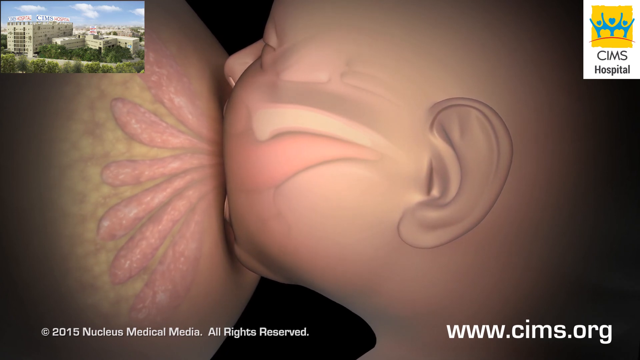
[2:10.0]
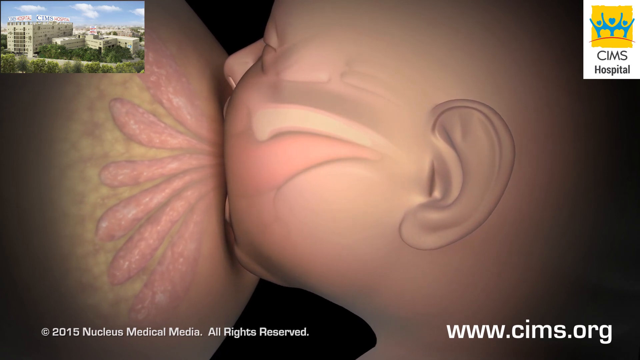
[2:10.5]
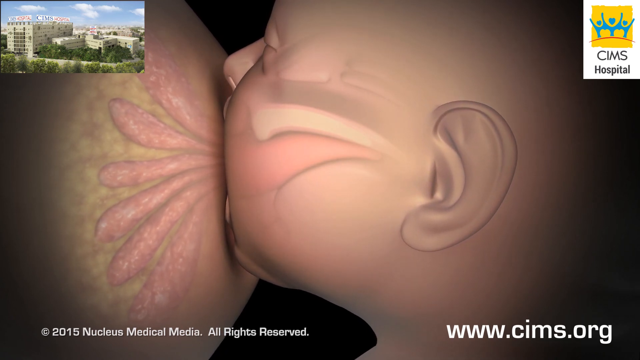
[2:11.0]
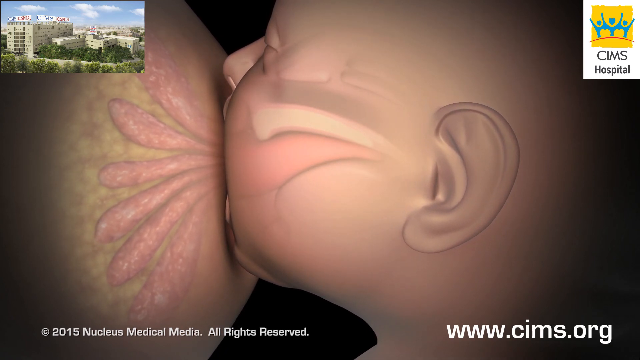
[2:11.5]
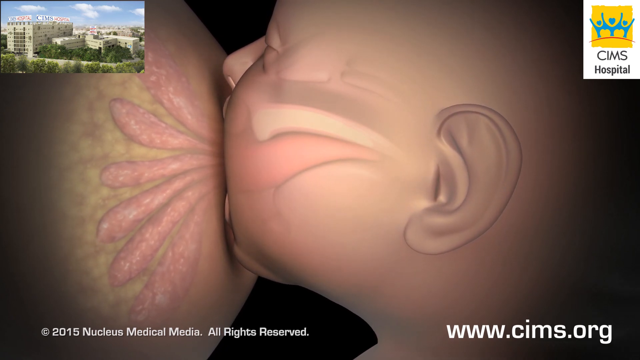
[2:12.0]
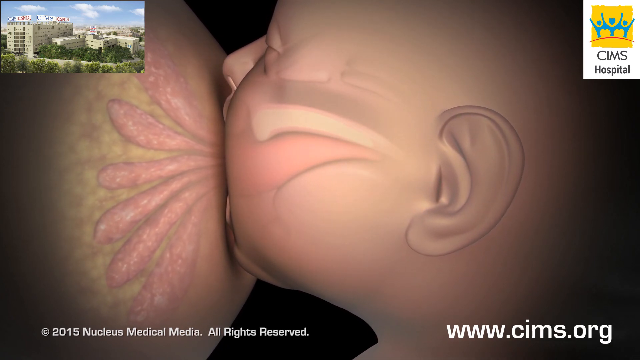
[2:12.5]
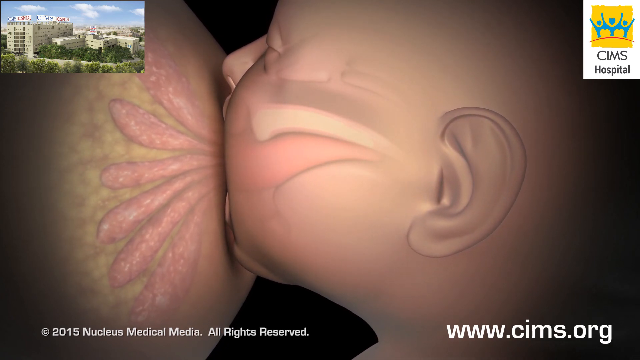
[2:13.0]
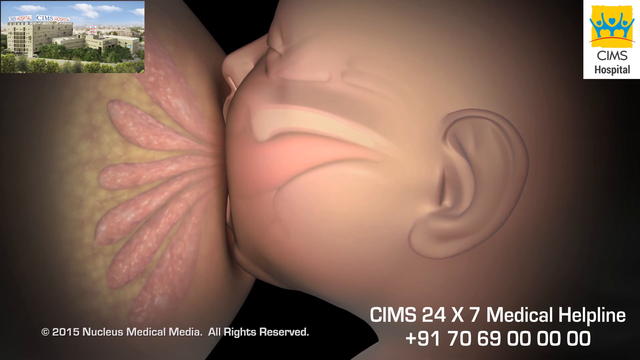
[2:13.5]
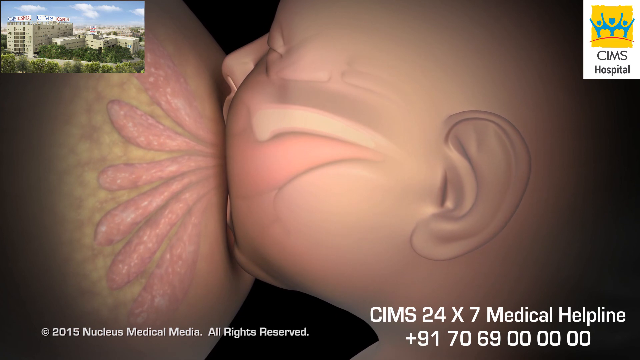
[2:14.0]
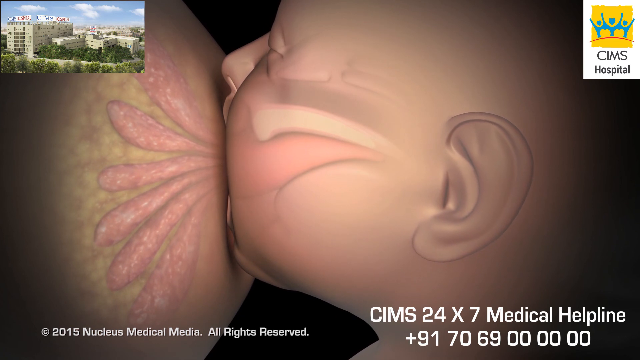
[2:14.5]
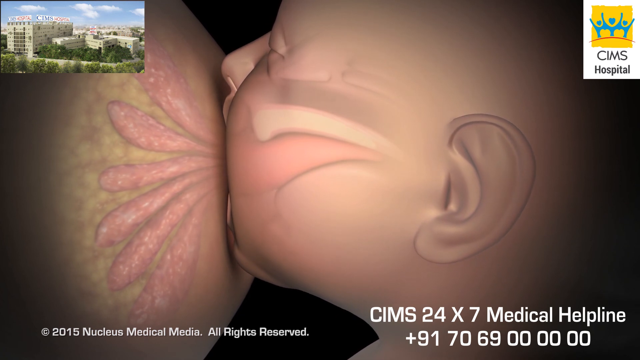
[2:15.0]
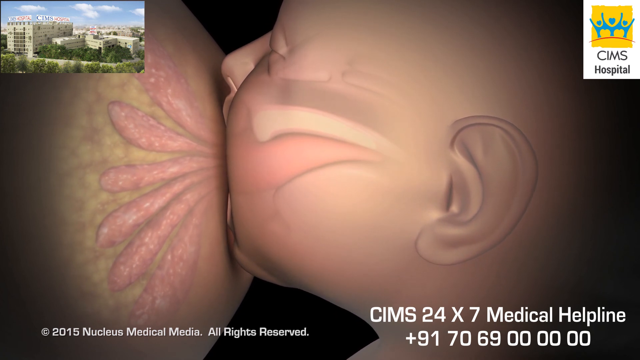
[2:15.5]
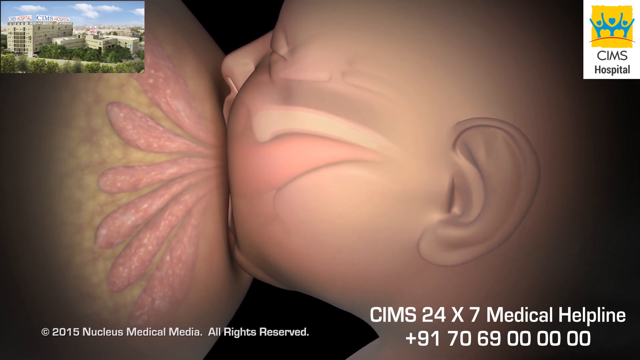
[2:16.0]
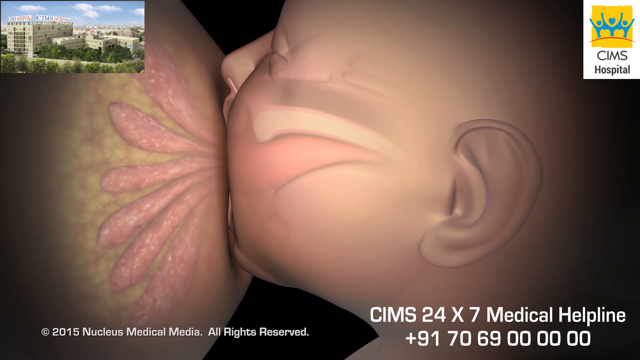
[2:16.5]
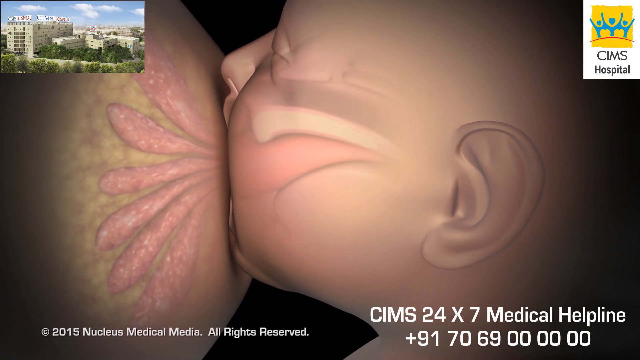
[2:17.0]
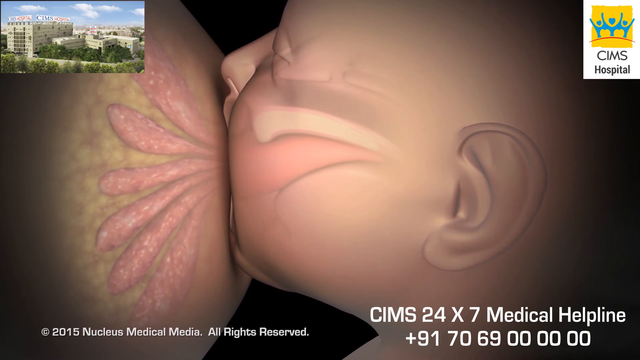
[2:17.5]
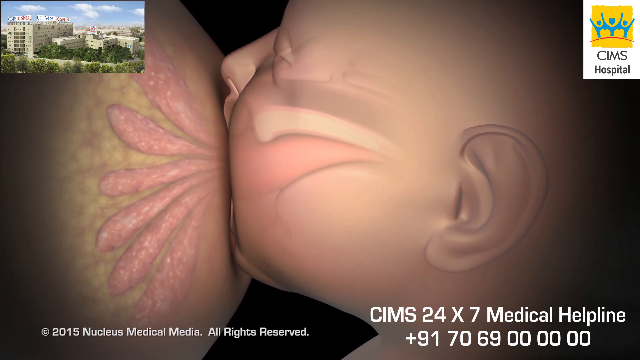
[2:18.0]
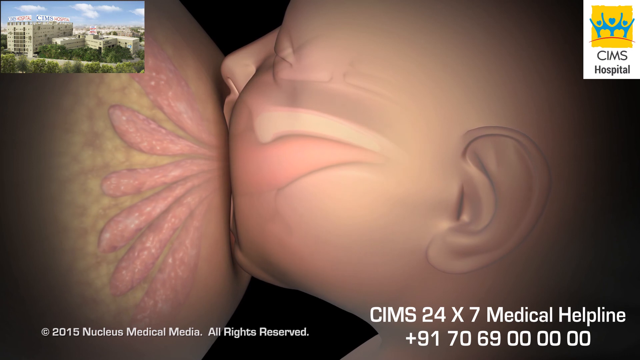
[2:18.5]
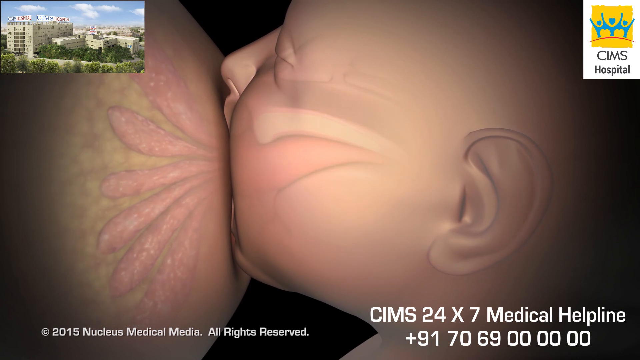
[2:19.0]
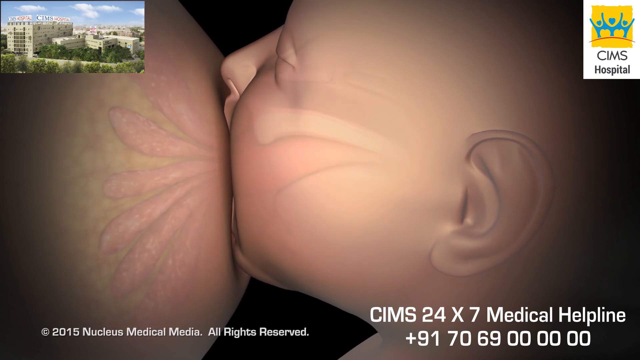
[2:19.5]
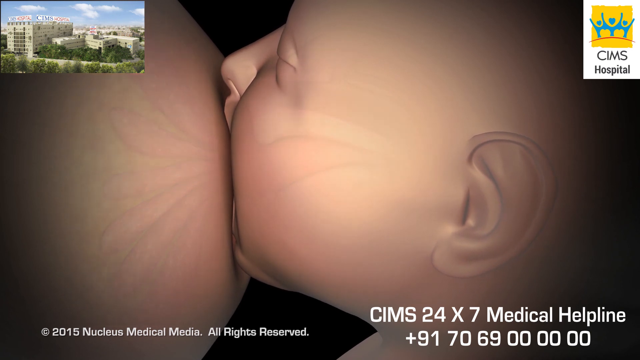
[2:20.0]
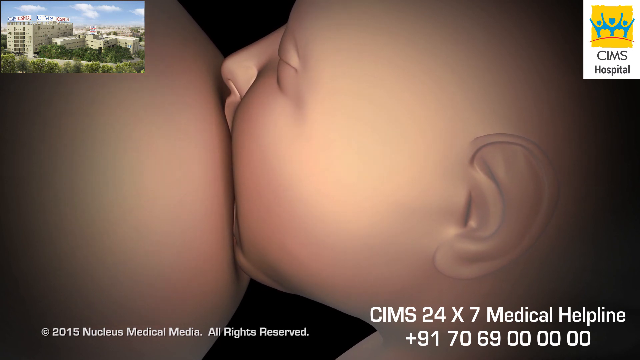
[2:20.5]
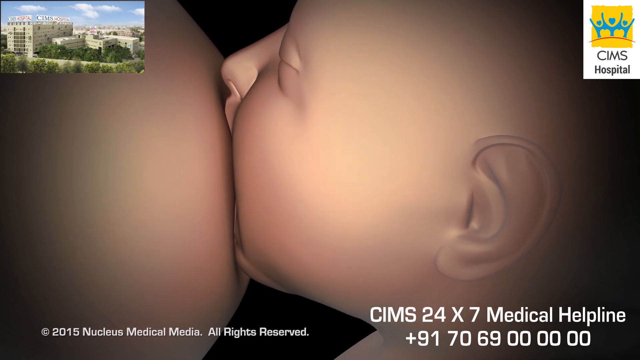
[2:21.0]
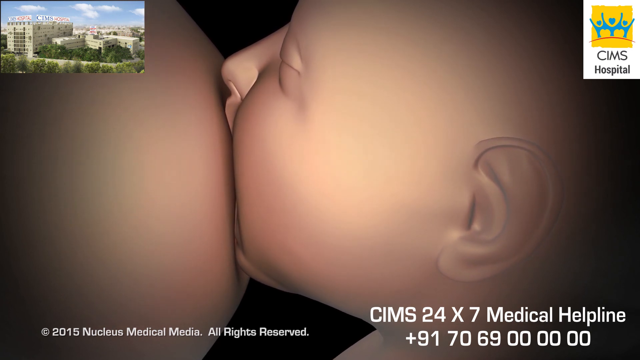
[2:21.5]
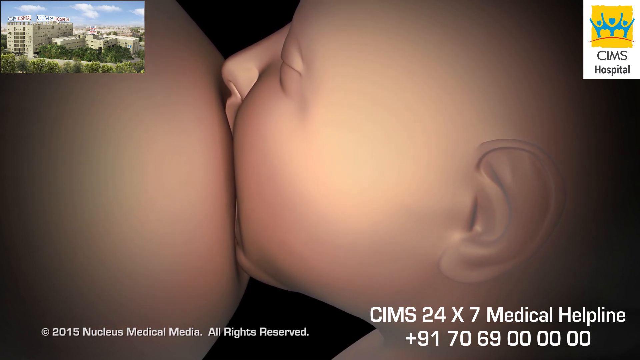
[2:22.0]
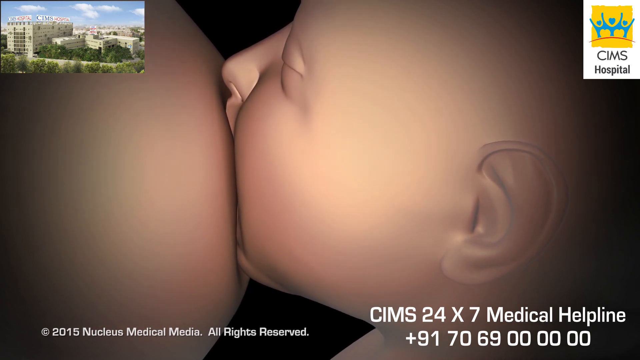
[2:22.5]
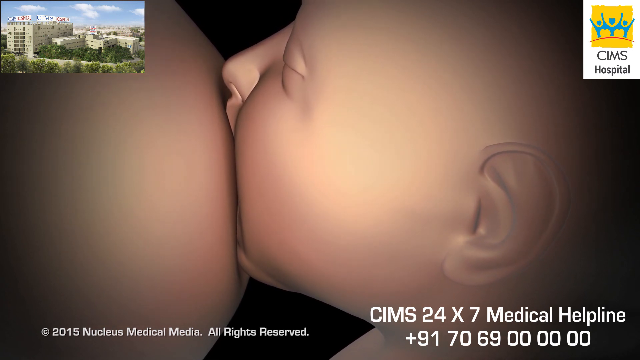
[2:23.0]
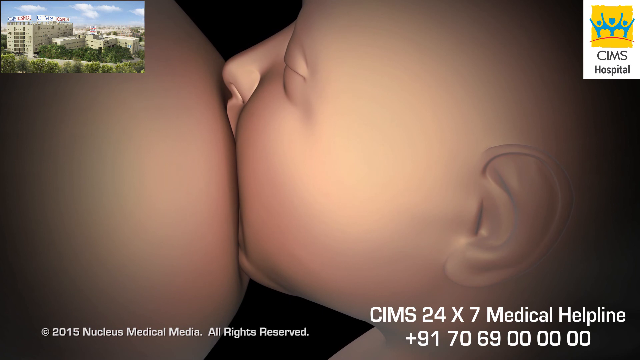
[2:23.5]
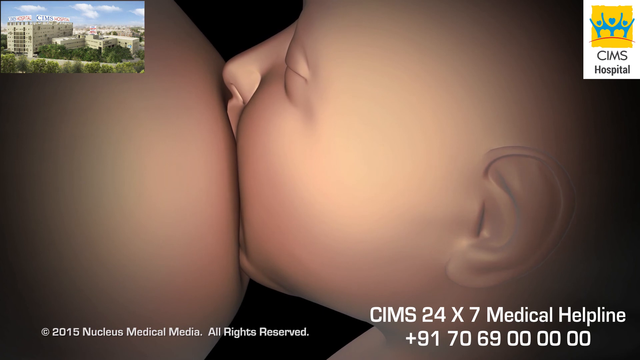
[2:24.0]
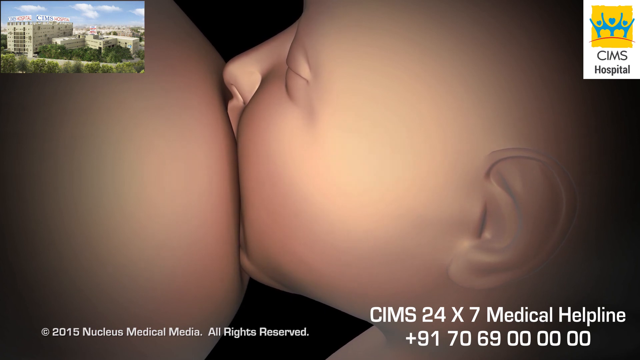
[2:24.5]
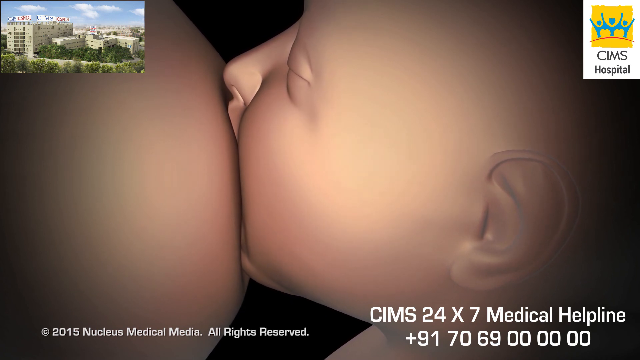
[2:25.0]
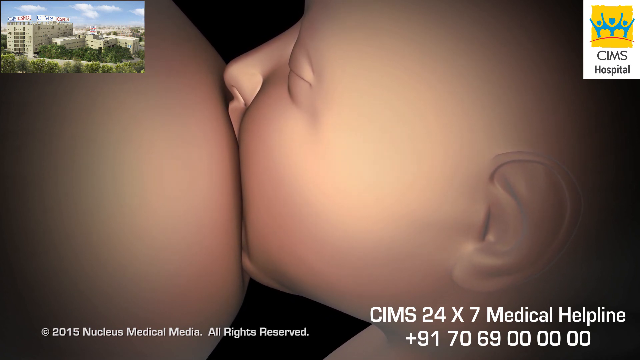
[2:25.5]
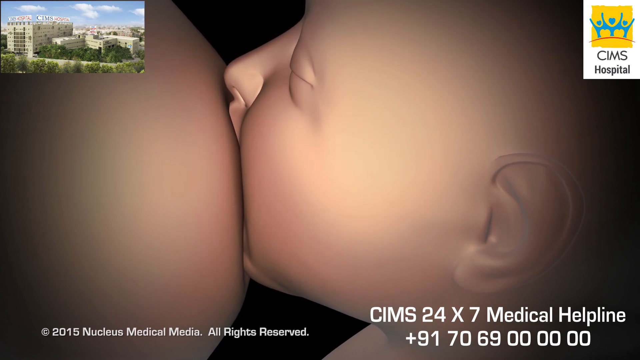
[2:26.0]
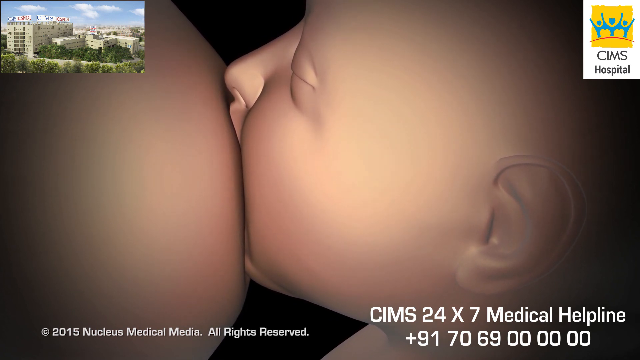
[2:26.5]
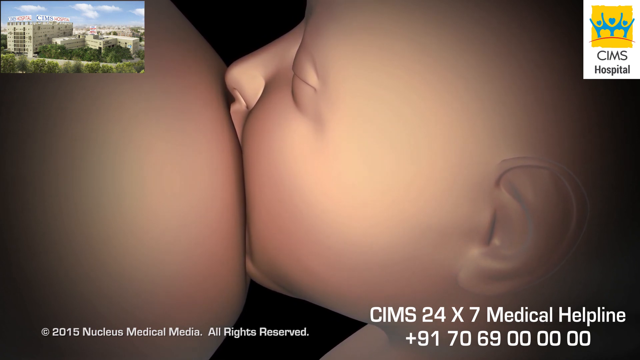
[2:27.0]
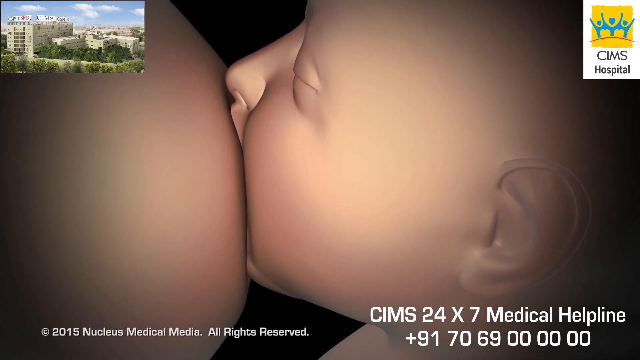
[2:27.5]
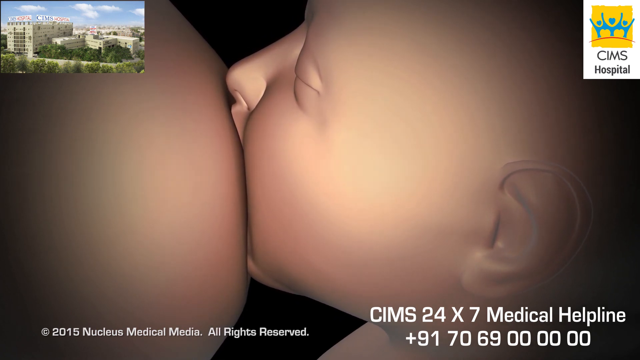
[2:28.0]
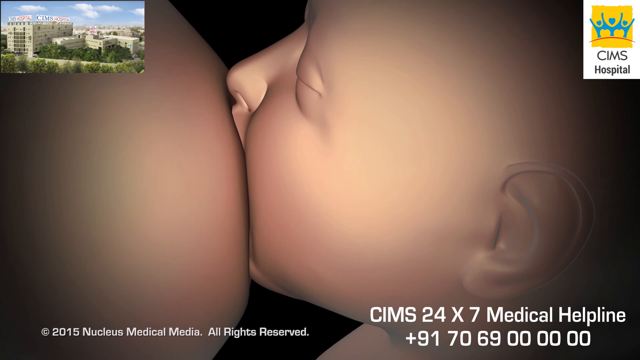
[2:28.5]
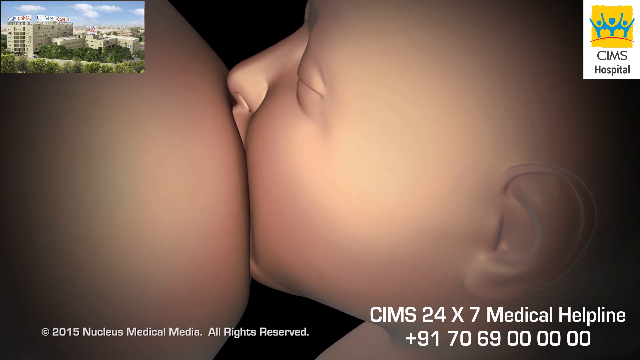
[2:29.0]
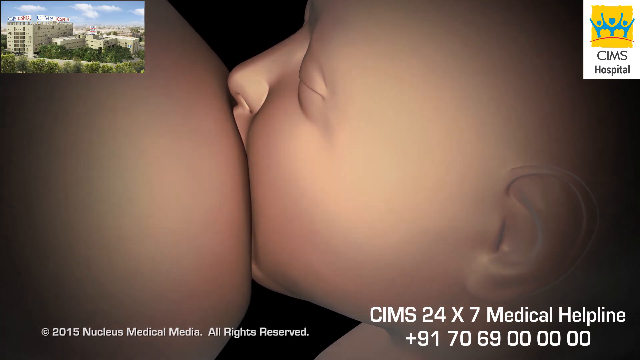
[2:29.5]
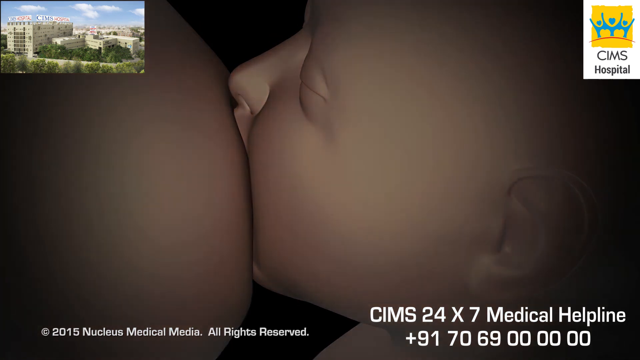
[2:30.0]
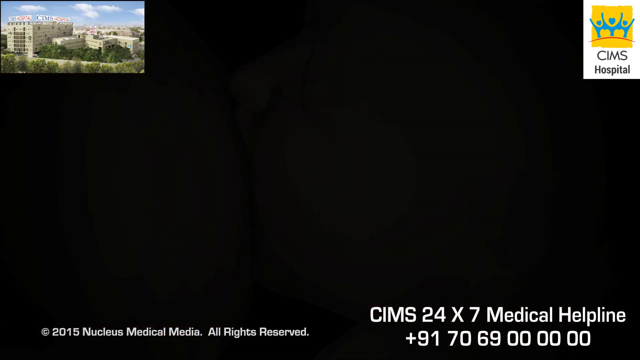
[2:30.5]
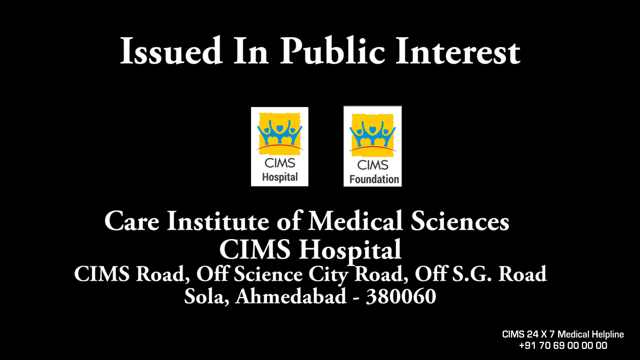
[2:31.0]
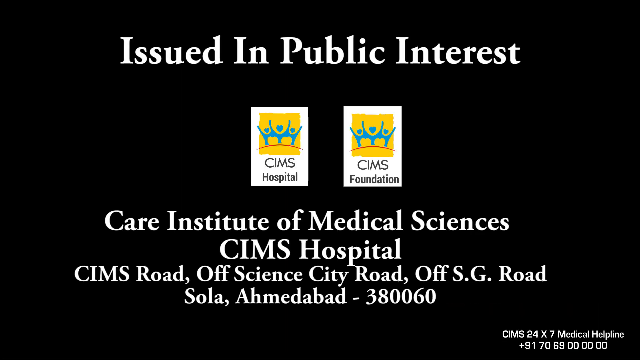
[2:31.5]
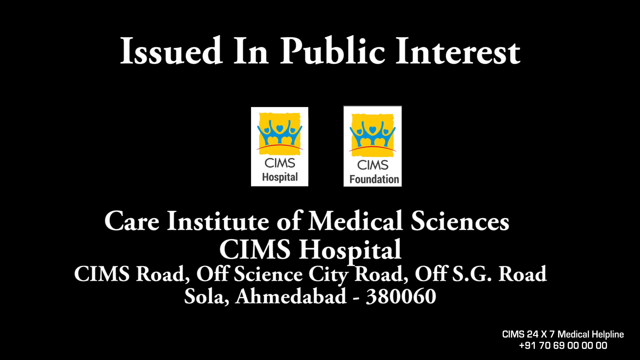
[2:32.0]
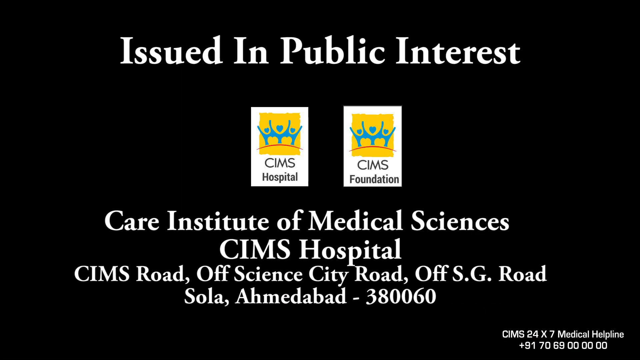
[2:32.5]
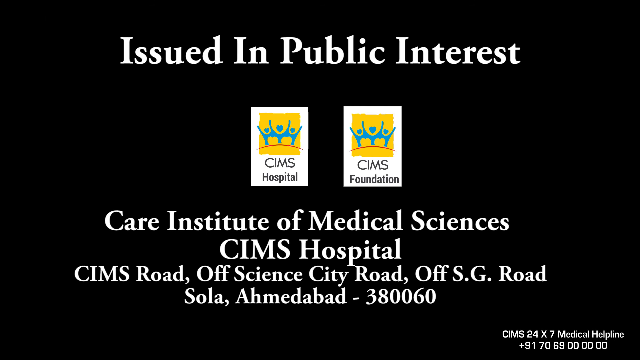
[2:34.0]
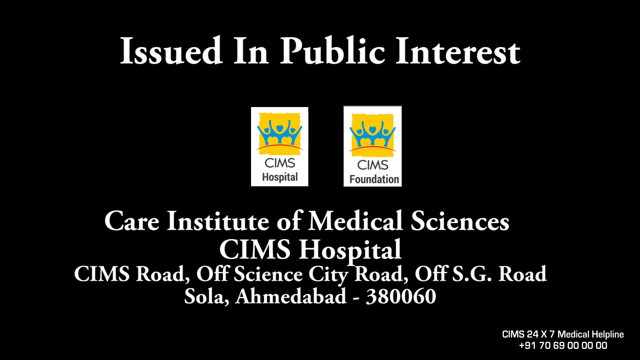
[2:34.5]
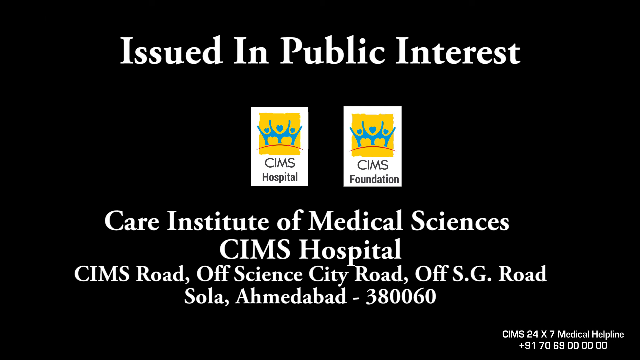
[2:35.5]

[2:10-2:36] The video indicates that a baby nurses anywhere from 8 to 12 times per day. The baby wraps its mouth around the nipple and sucks, with its nose on the breast. Contact information is given for the Care Institute of Medical Services at CIMS Hospital, located on CIMS Road, off Science City Road, off S.G. Road, Sola, Ahmedabhad.